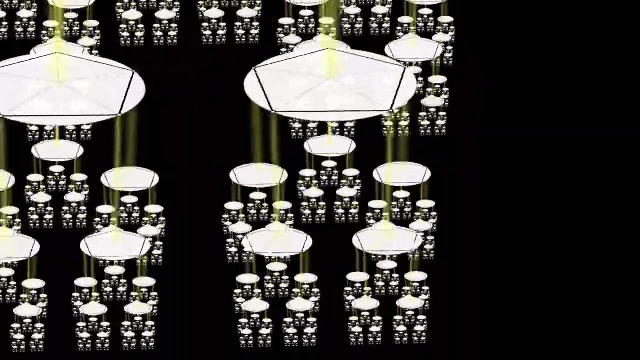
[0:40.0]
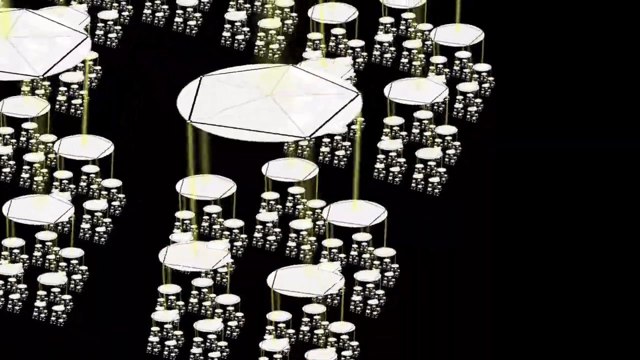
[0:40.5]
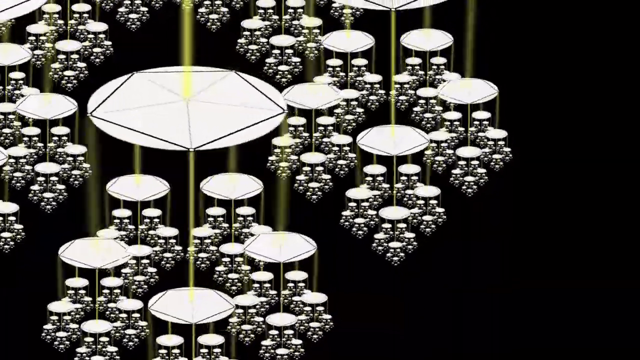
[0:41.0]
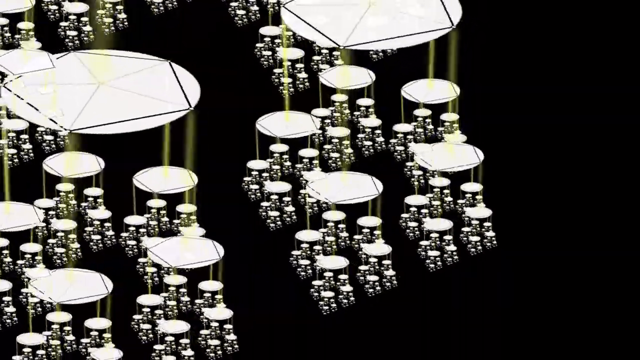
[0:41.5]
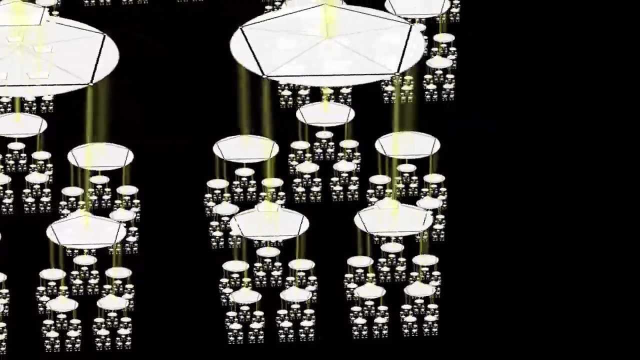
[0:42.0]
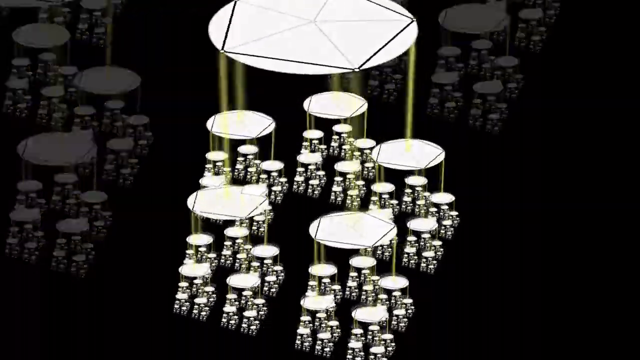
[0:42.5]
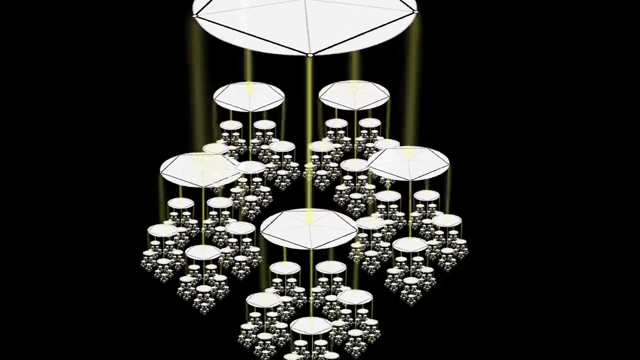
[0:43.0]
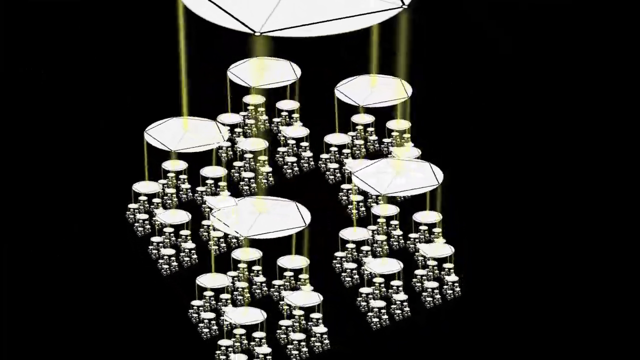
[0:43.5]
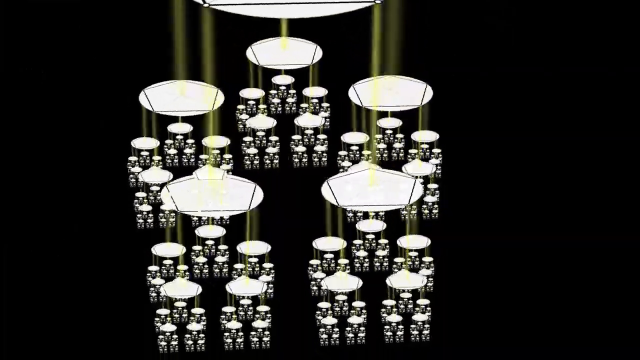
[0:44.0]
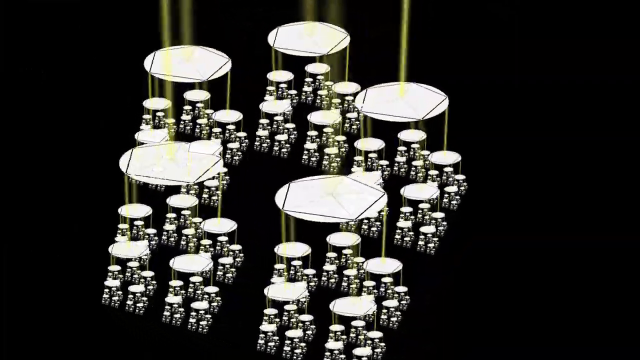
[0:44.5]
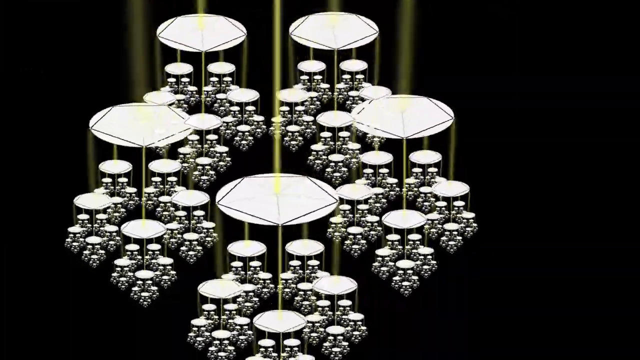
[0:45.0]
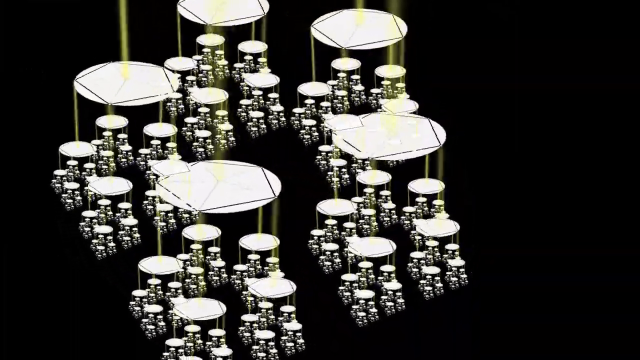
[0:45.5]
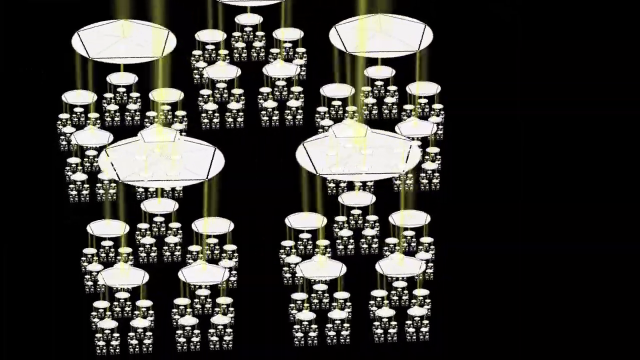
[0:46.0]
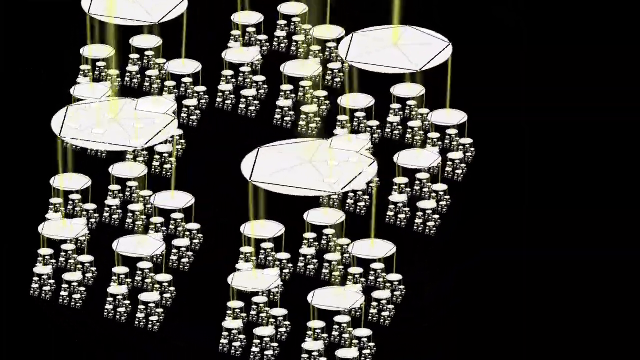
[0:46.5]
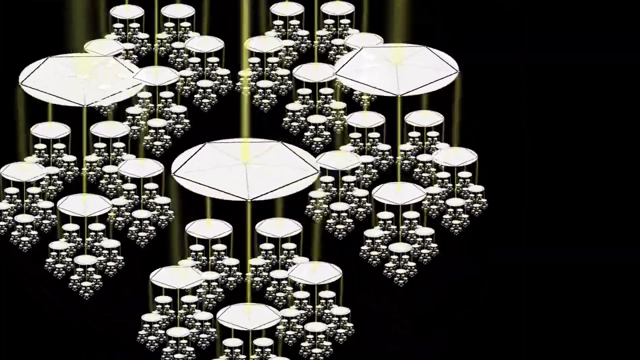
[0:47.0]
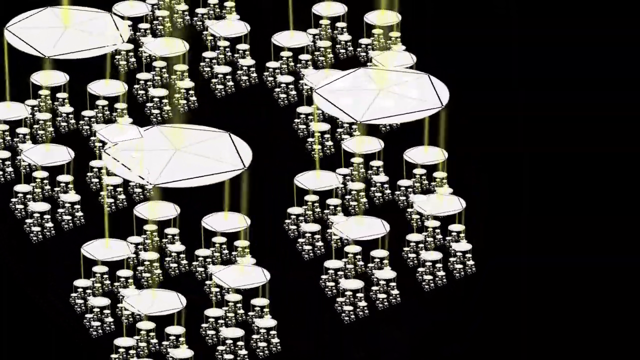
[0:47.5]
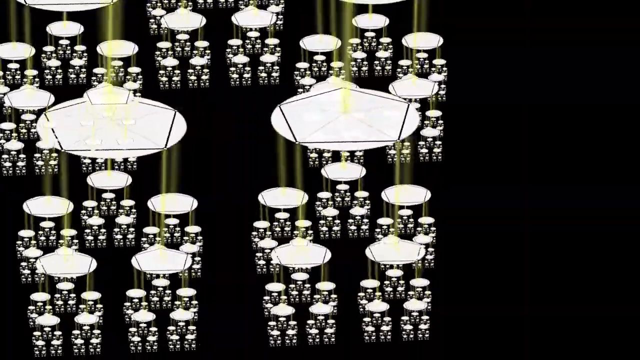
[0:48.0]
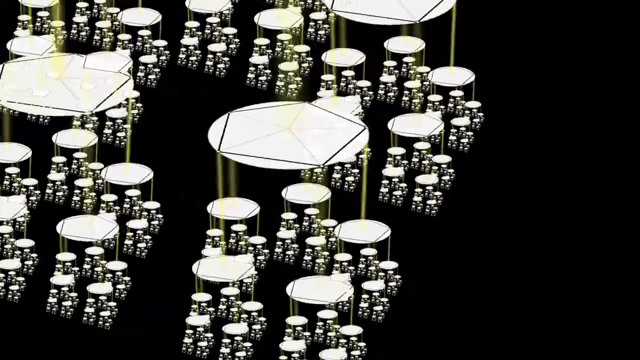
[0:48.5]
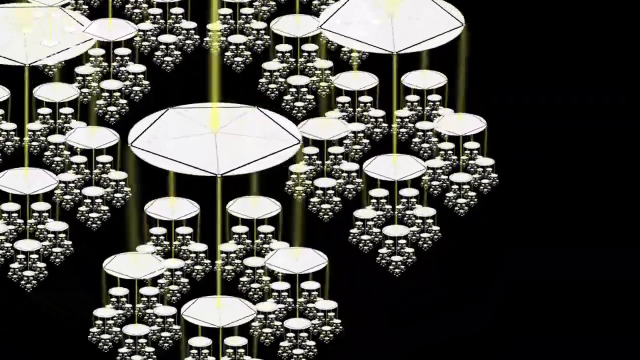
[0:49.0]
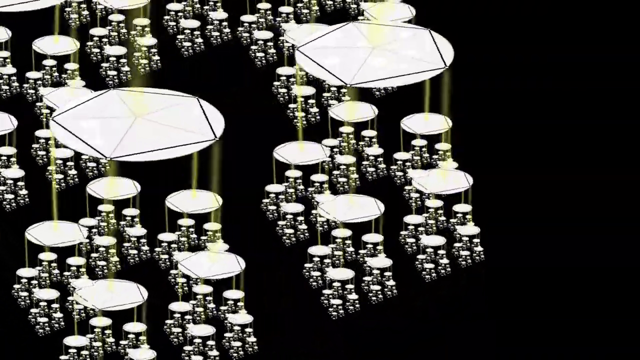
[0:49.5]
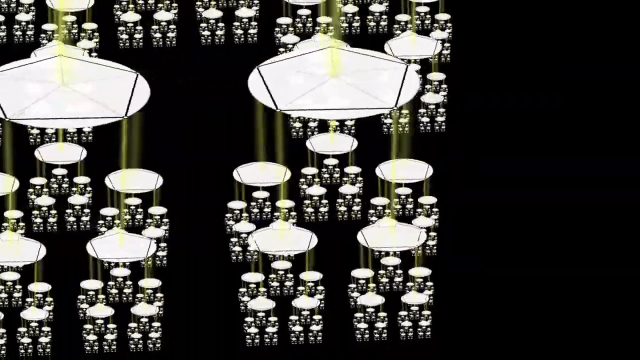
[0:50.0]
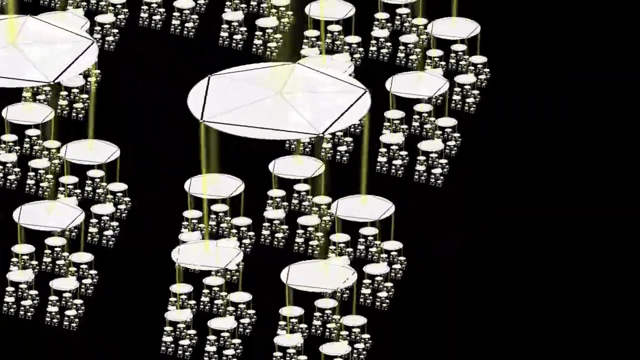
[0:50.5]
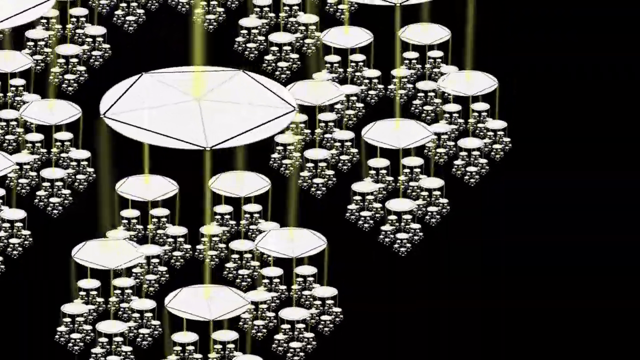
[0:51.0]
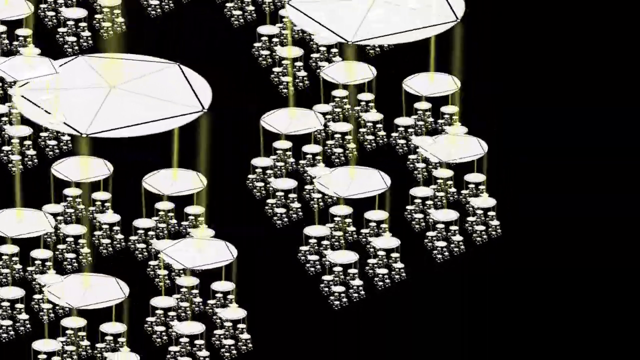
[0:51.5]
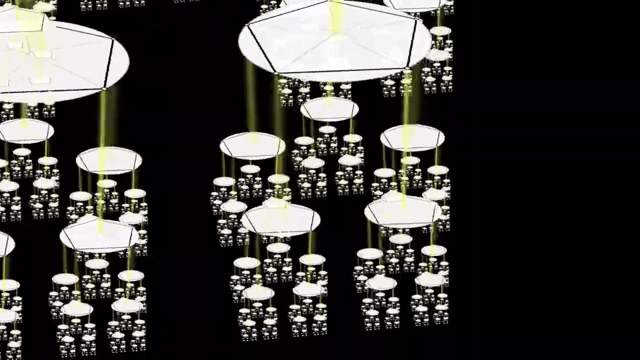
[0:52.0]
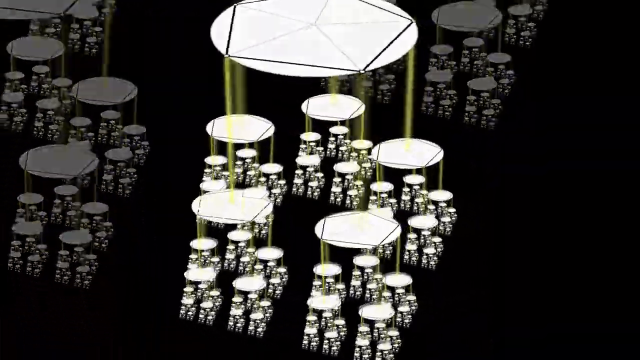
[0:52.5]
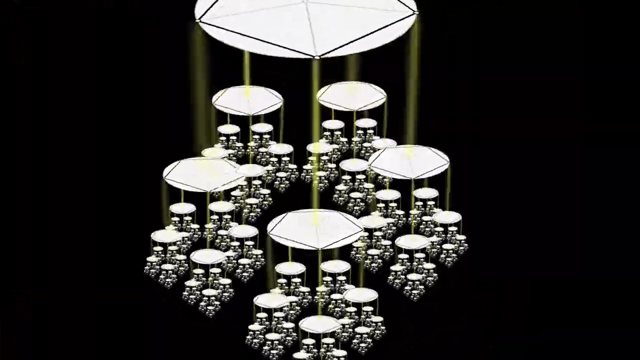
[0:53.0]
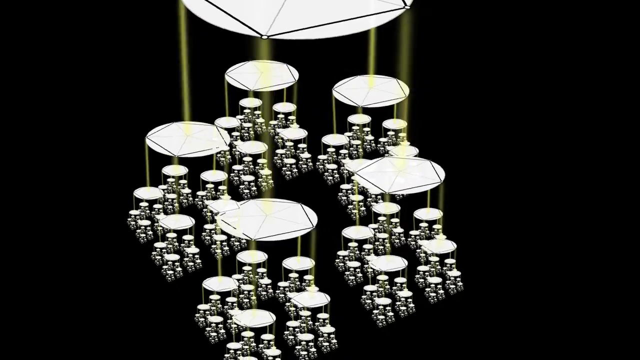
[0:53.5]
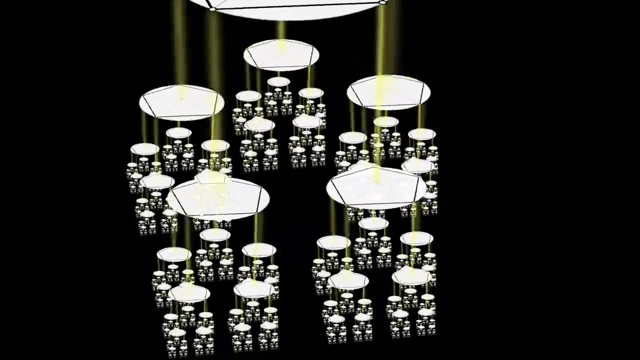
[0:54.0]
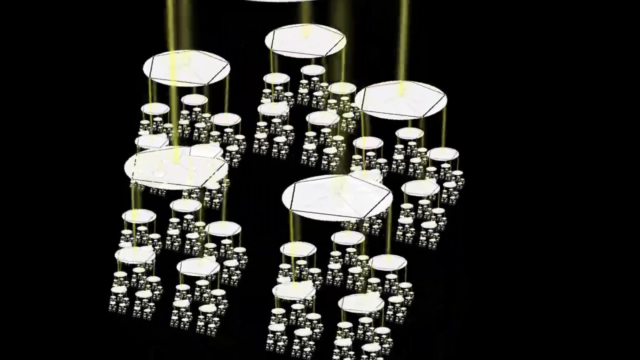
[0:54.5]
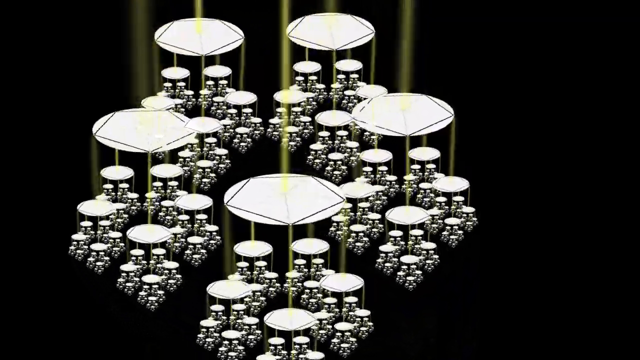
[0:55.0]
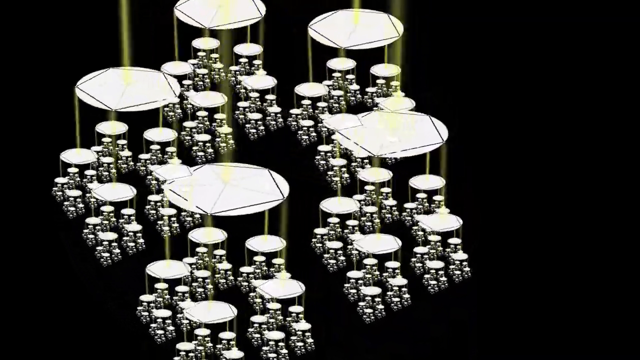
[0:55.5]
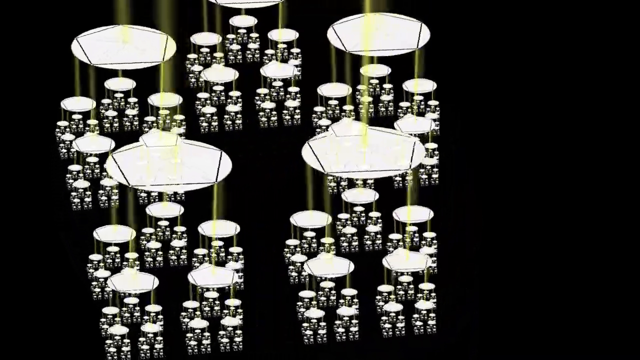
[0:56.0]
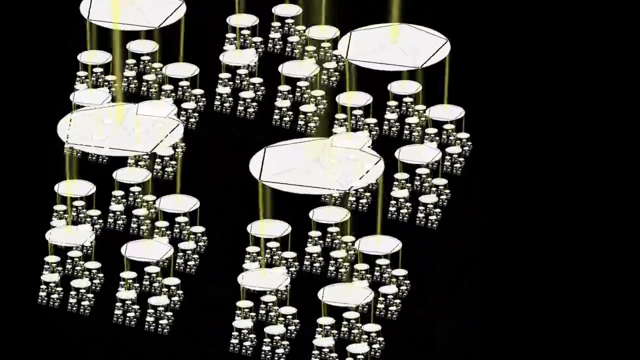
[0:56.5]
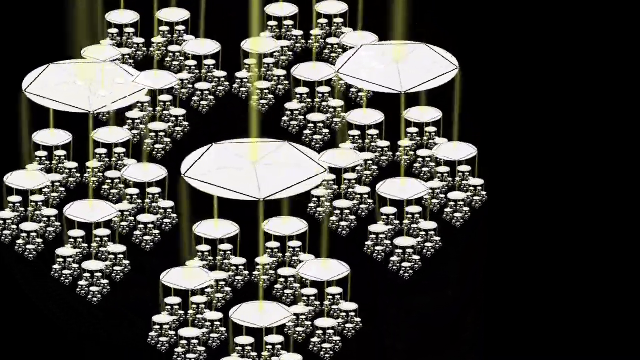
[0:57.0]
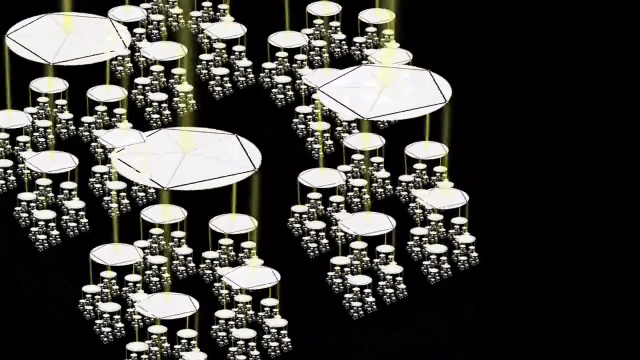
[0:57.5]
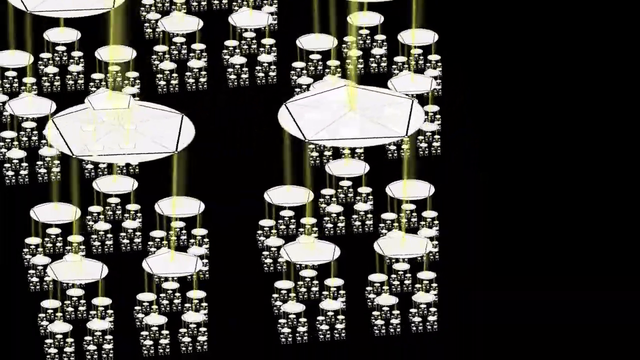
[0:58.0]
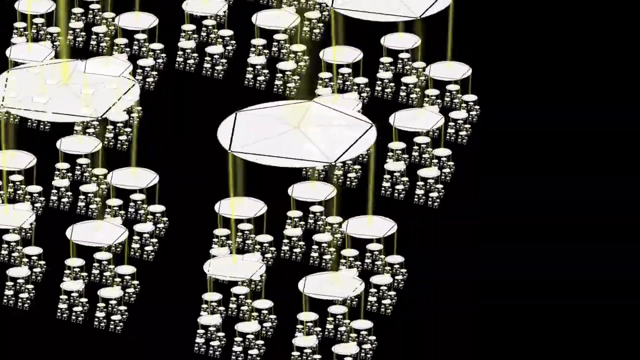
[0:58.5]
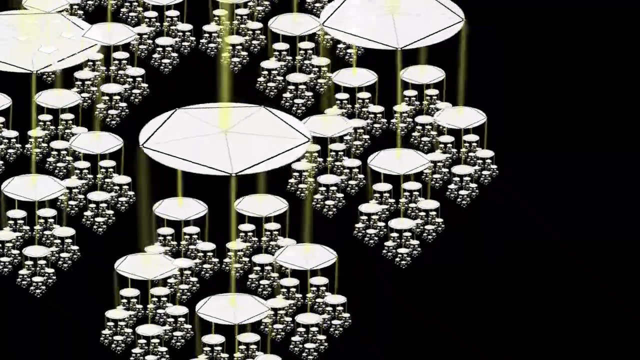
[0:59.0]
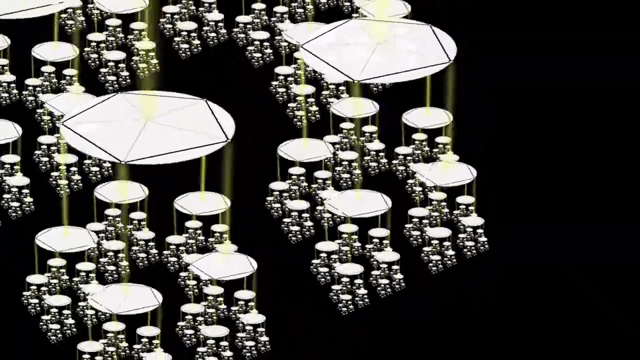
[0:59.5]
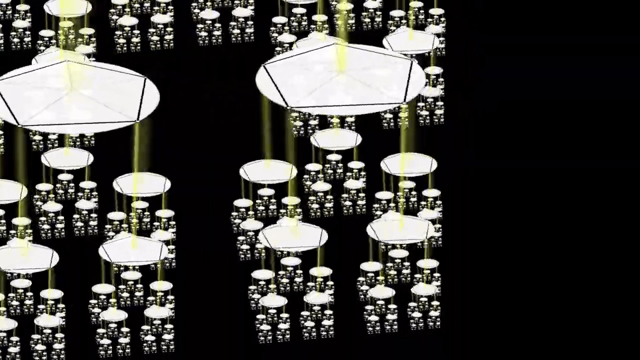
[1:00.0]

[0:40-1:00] Set against an empty black background is a flat white disc with a black pentagram shape on its face. From the five points of the pentagram, beams of light descend into smaller flat white discs with black pentagram shapes on their faces, and from the five points of those smaller discs, beams of light descend onto even smaller white discs with black pentagram shapes. This continues with smaller and smaller discs shown infinitely, while all of the discs rotate clockwise against the black background. The viewpoint keeps getting smaller with each rotation of the discs, eventually settling on a new focus on one of the discs, and the viewpoint grows smaller and smaller again and again infinitely.